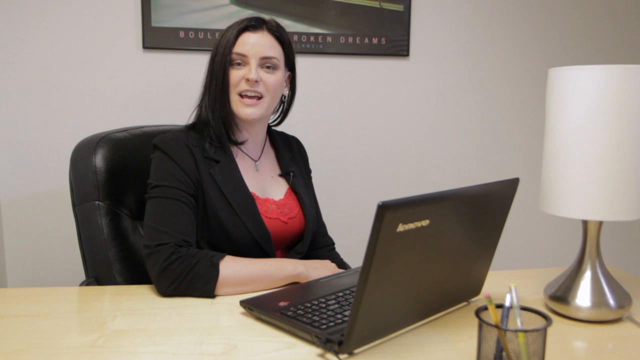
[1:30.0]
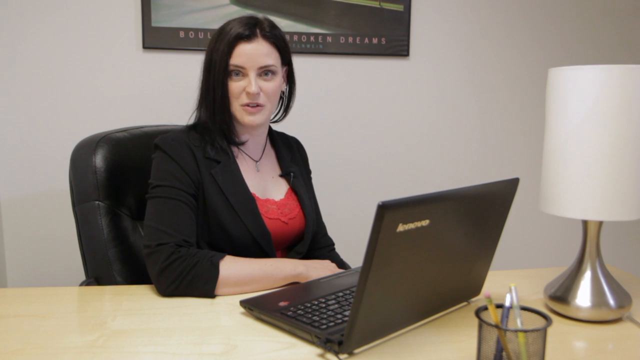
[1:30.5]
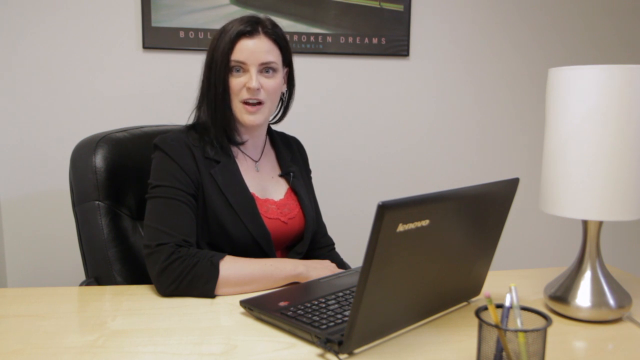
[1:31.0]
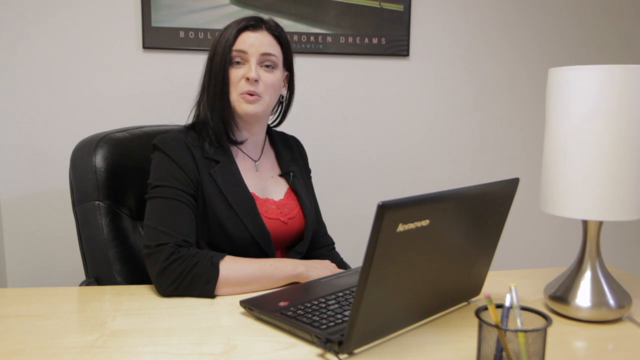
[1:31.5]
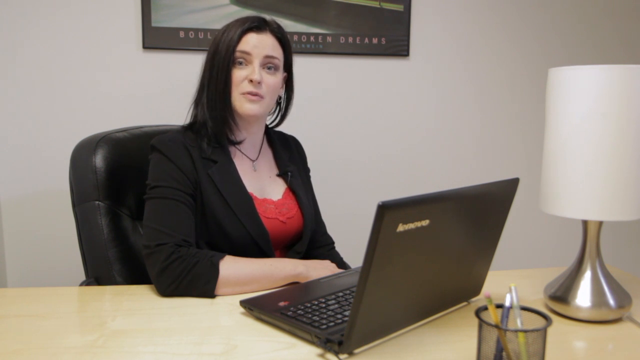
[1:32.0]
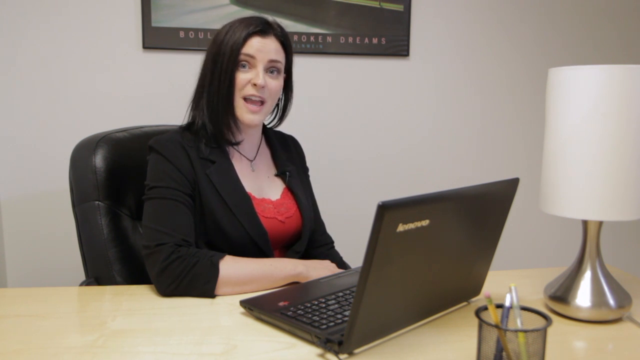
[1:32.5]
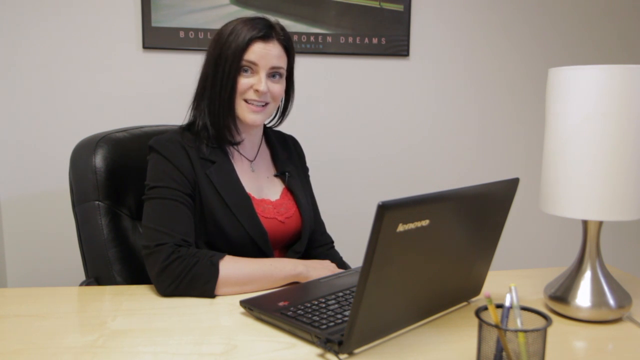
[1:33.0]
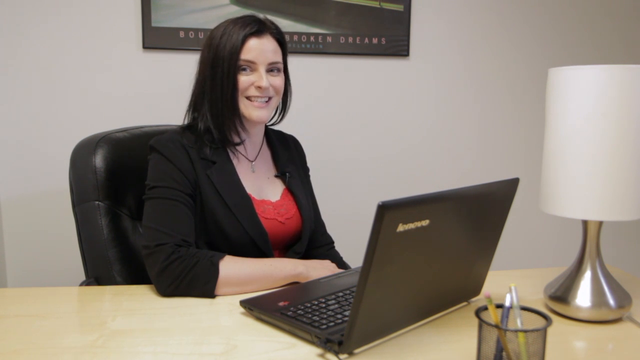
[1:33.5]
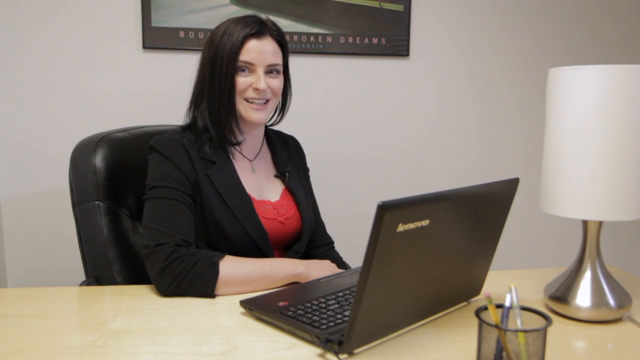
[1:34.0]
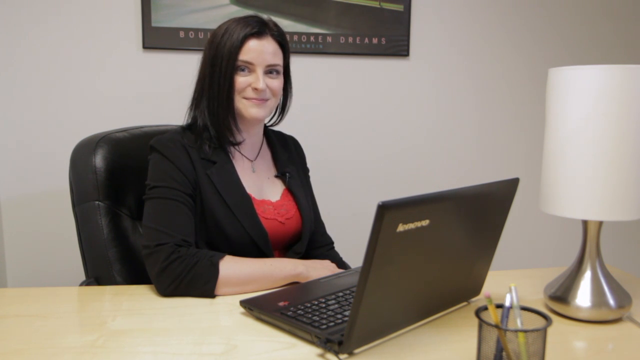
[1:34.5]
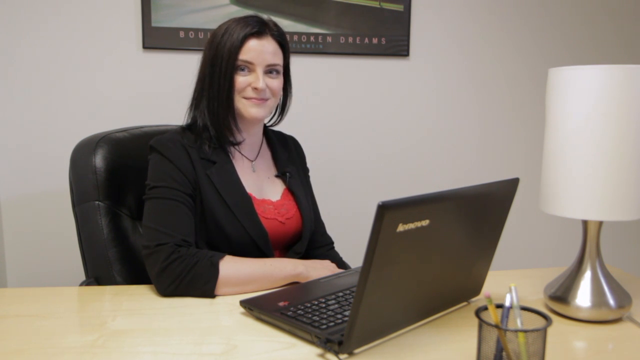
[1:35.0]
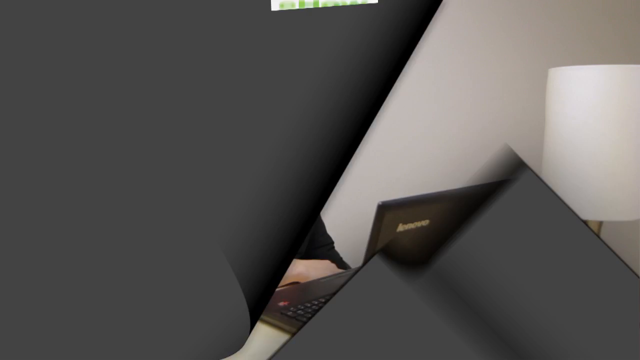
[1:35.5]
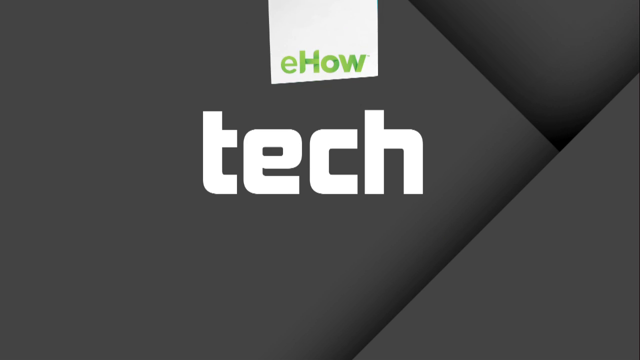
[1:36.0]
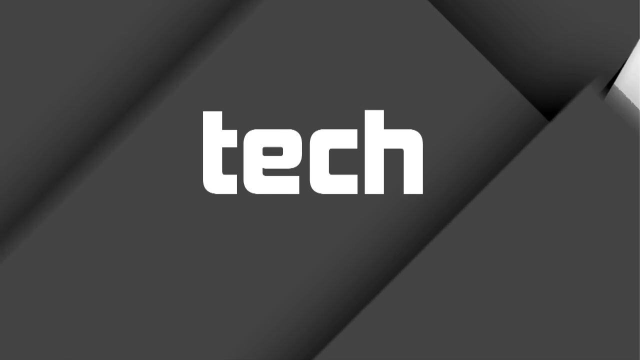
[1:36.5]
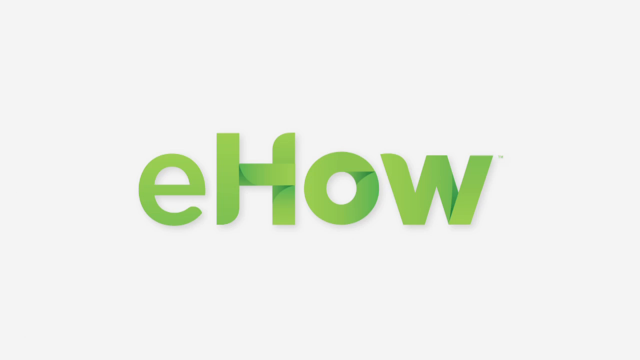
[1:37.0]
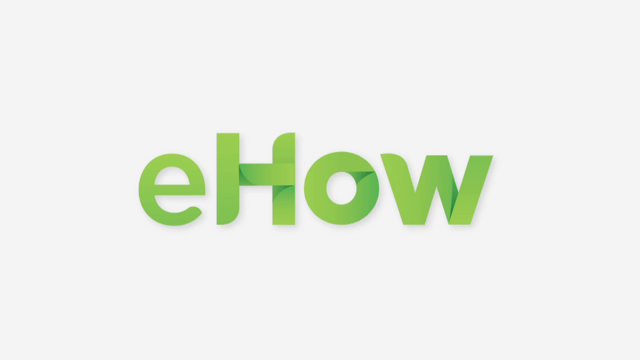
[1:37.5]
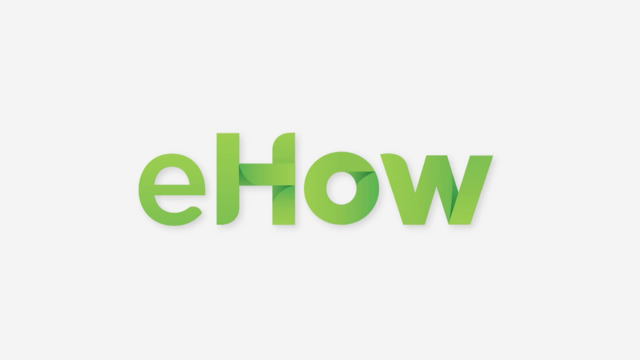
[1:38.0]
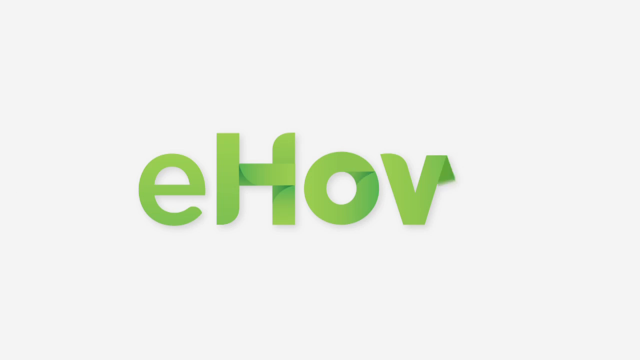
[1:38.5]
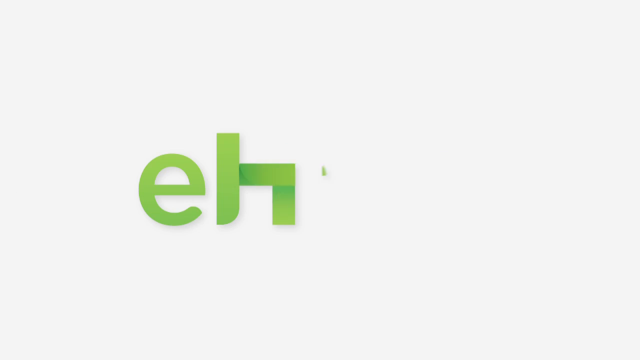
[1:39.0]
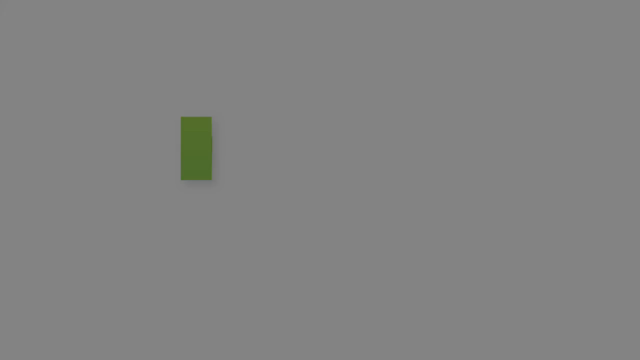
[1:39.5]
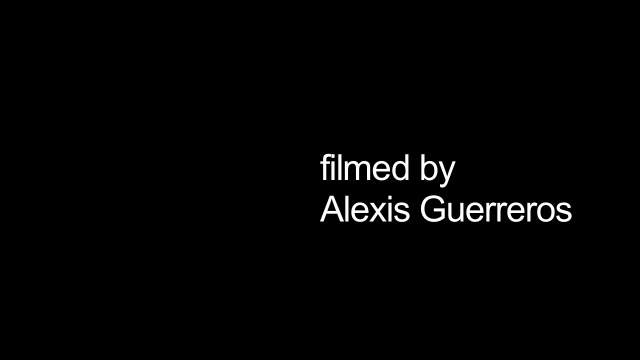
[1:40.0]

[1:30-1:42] The woman is still sitting at her desk talking to the camera, looking directly at it; the camera apparently is a separate setup rather than her computer. The screen then goes black, showing a square and what look like three-dimensional papers kind of stacked on top of each other in gray-black, with the word "tech" in white font. That disappears, and a white background appears with the ehow logo again: the "e" lowercase and "how" all capitalized, in lime green. The "how" almost looks like it is made out of construction paper, with folds visible in it.